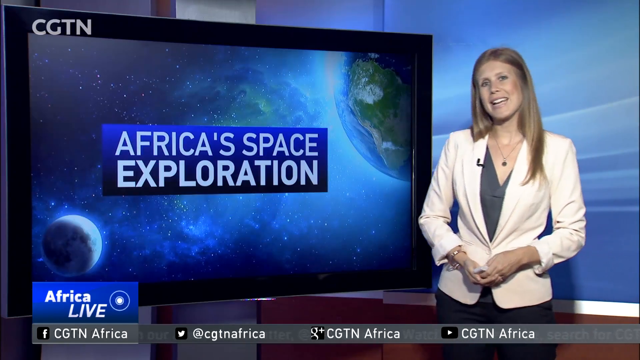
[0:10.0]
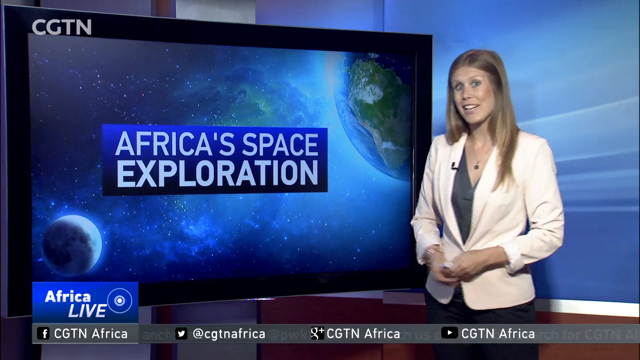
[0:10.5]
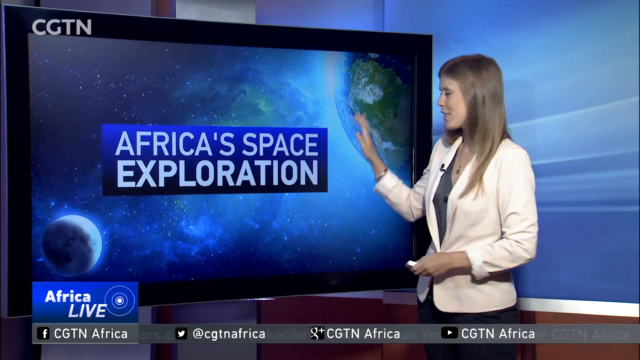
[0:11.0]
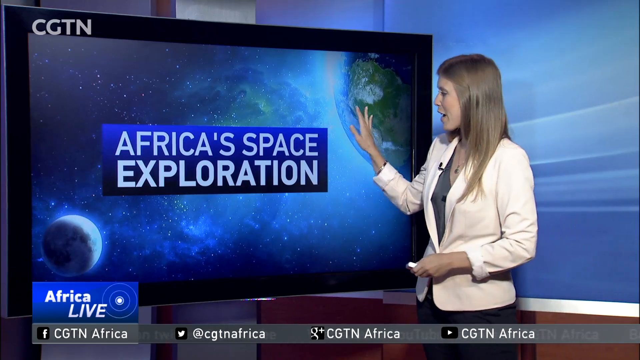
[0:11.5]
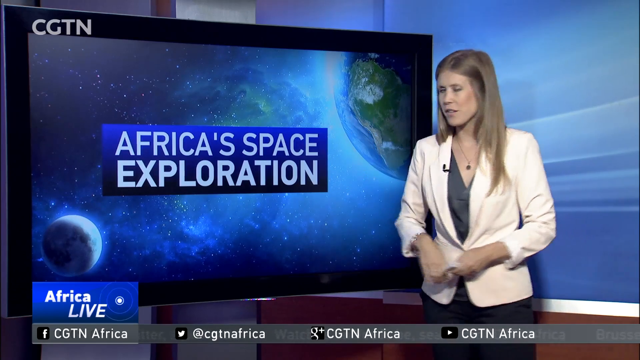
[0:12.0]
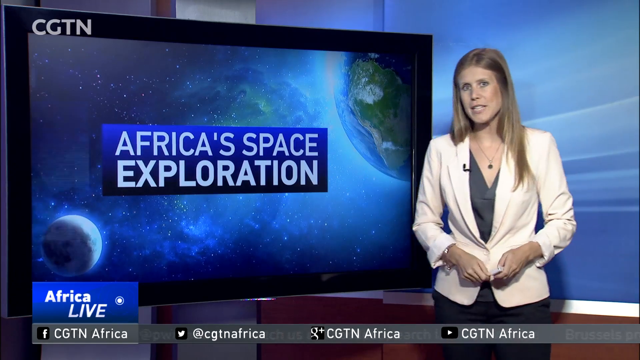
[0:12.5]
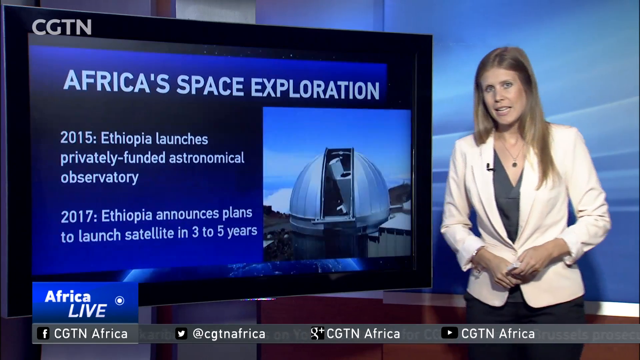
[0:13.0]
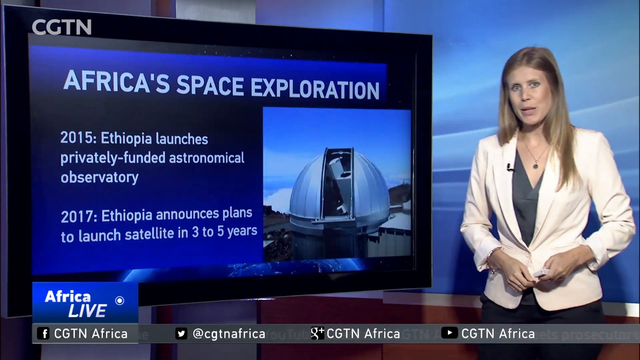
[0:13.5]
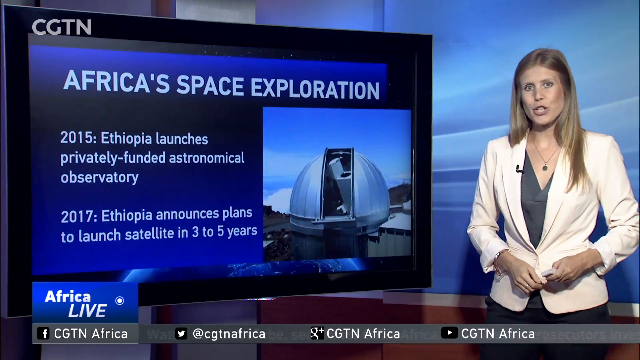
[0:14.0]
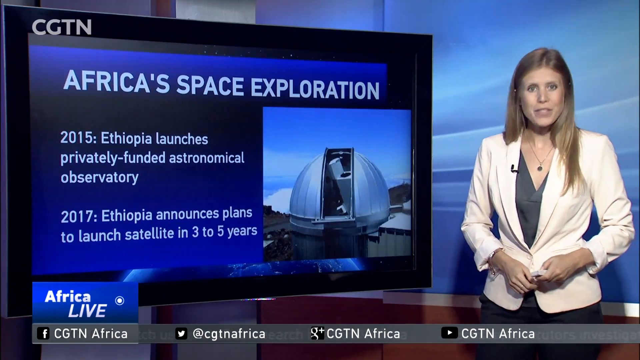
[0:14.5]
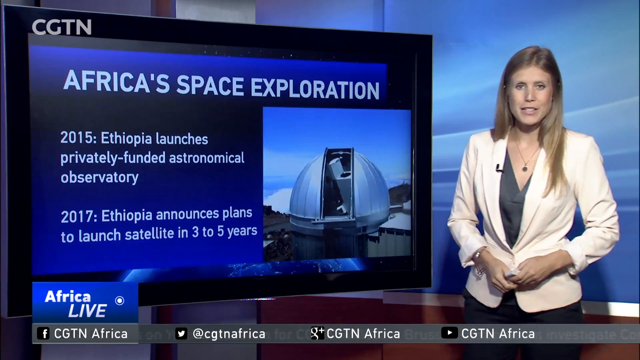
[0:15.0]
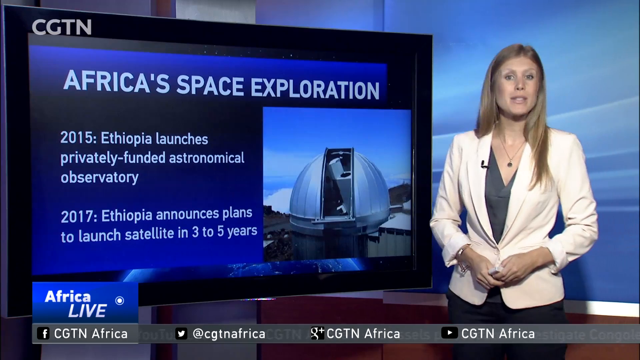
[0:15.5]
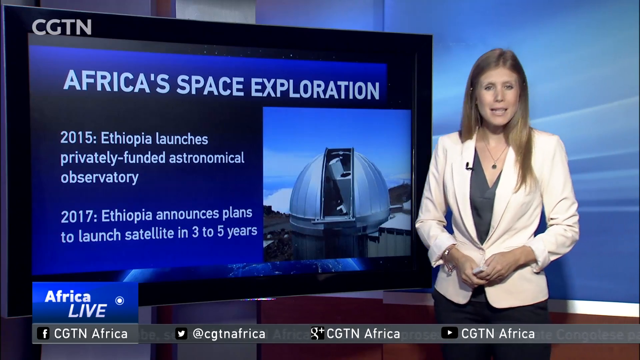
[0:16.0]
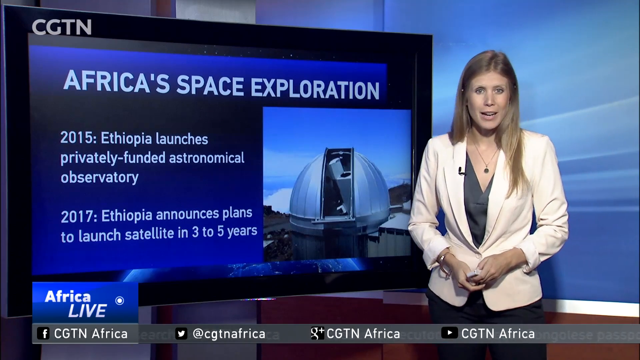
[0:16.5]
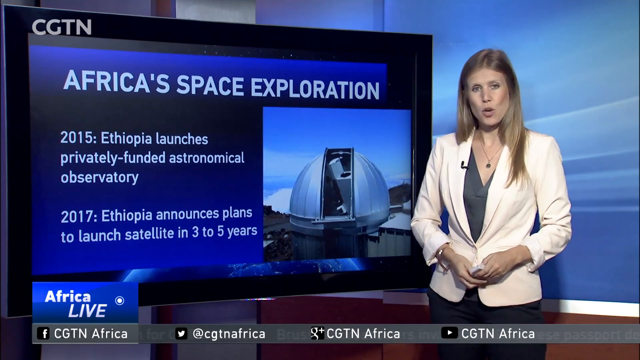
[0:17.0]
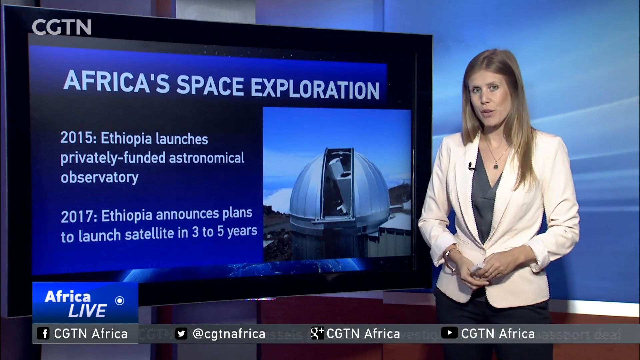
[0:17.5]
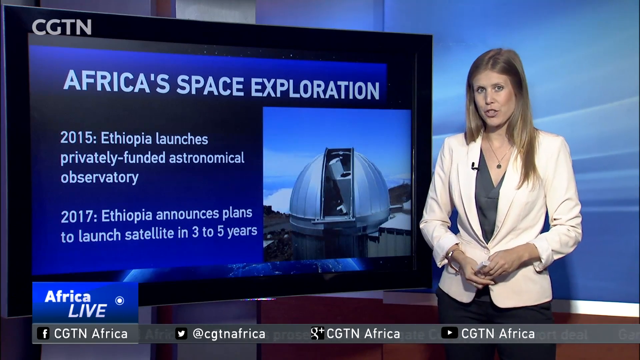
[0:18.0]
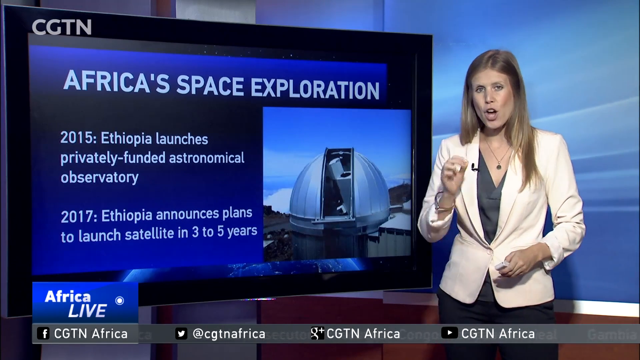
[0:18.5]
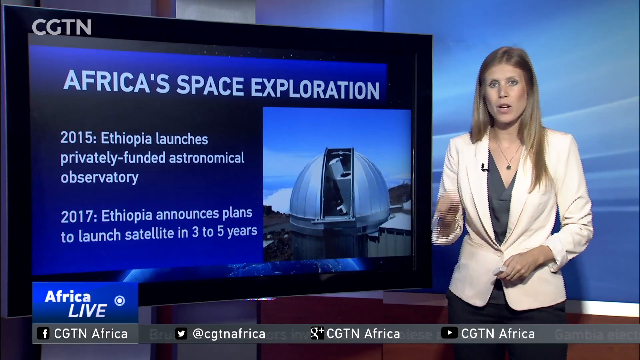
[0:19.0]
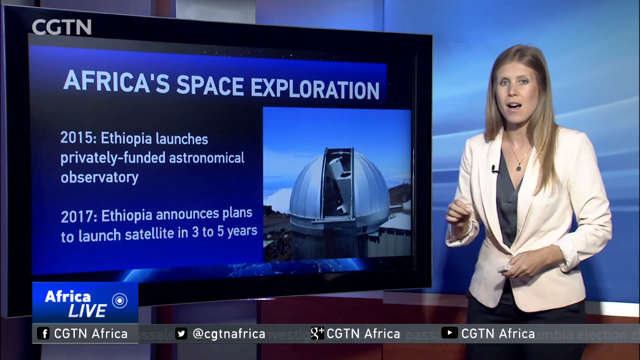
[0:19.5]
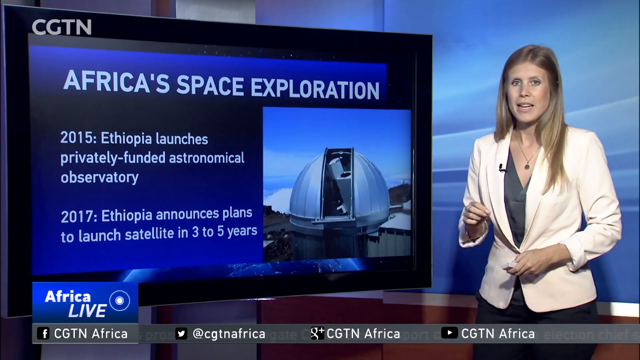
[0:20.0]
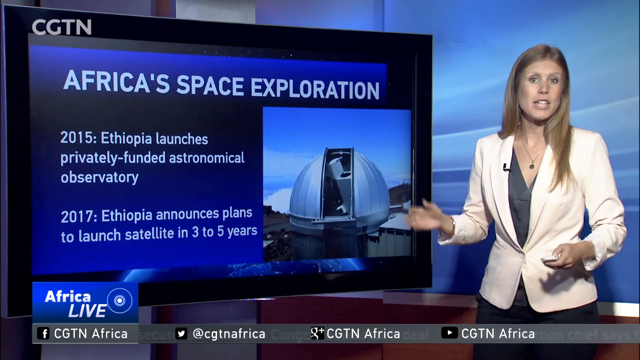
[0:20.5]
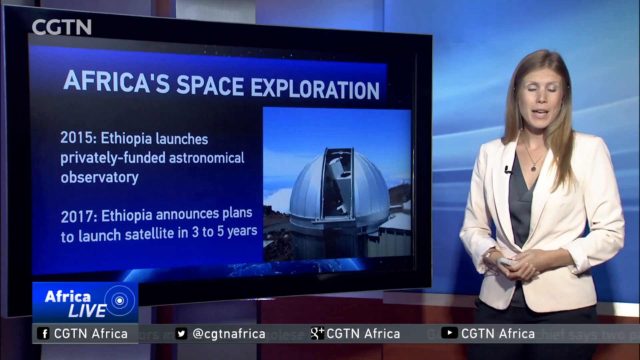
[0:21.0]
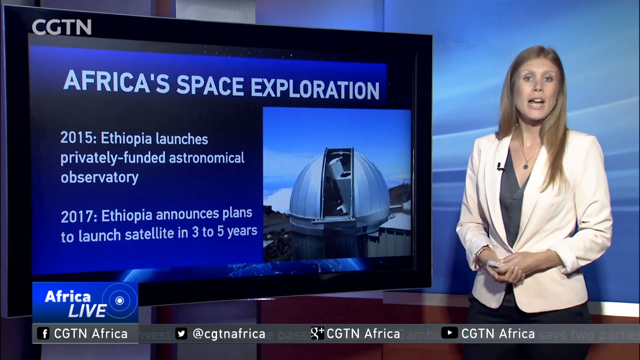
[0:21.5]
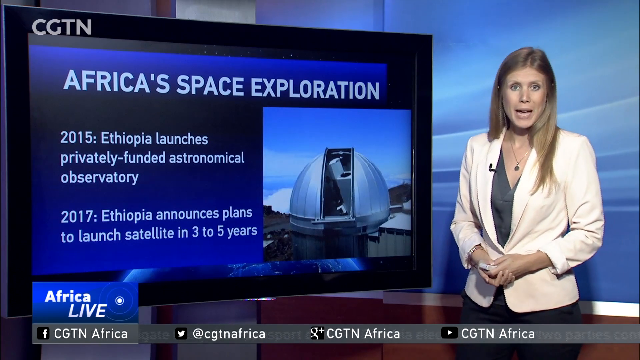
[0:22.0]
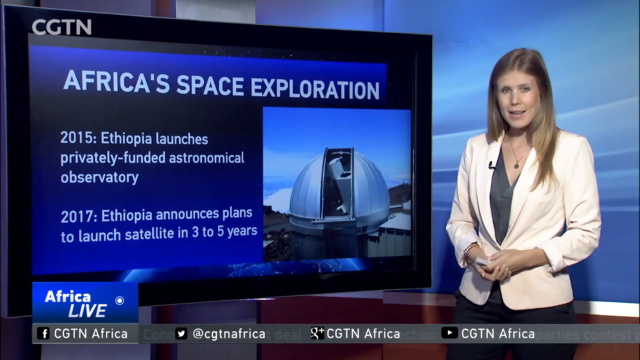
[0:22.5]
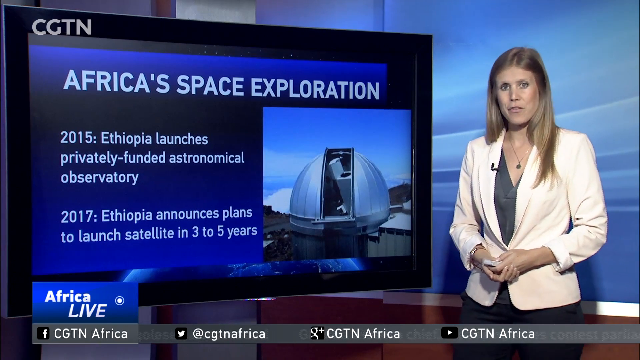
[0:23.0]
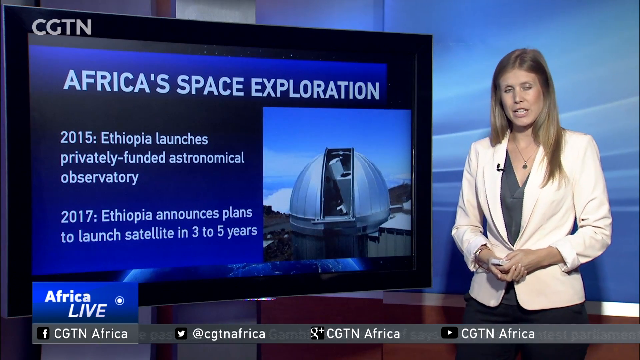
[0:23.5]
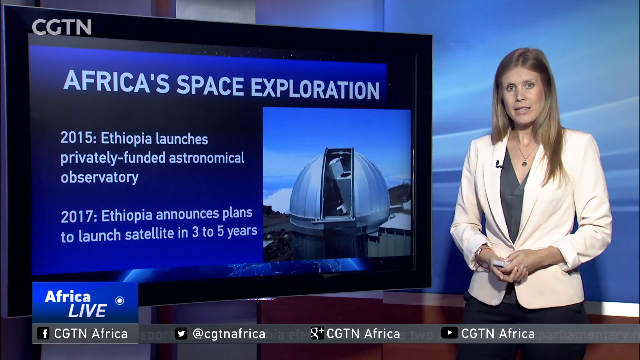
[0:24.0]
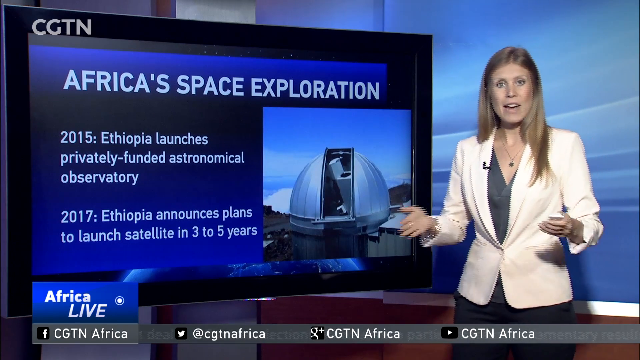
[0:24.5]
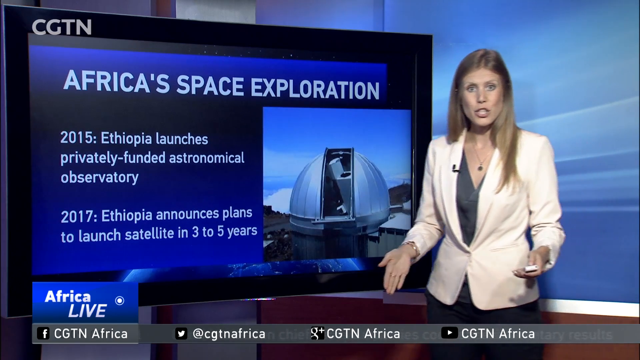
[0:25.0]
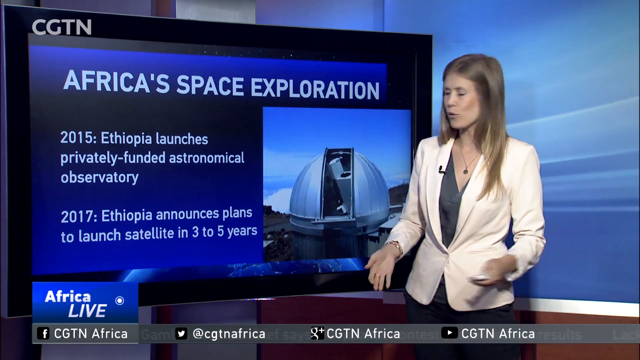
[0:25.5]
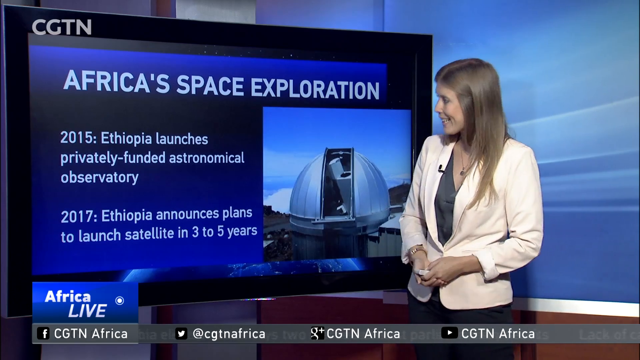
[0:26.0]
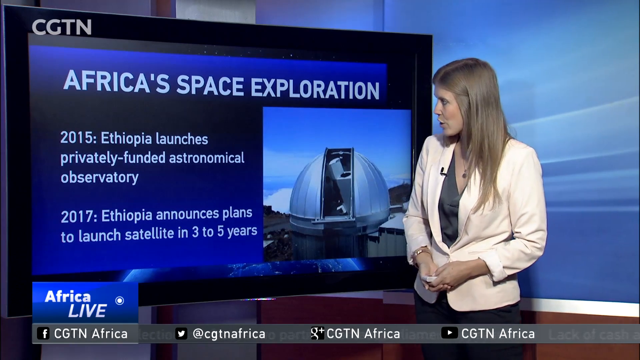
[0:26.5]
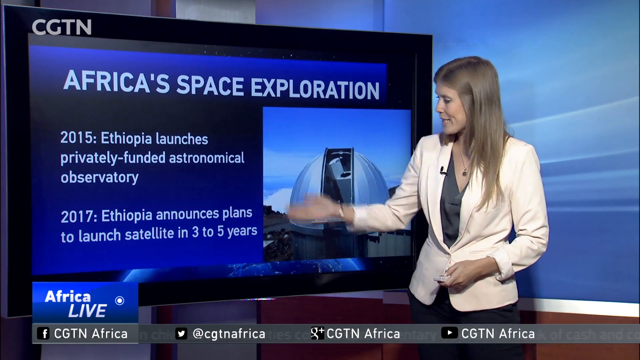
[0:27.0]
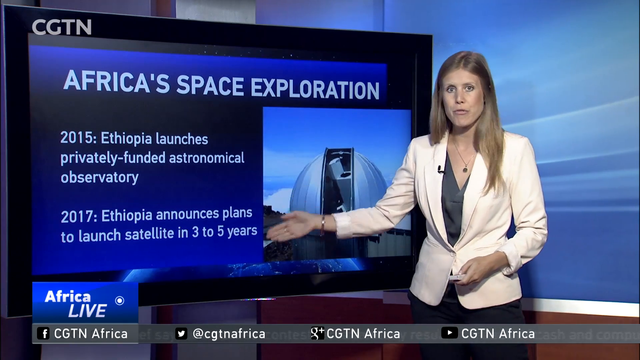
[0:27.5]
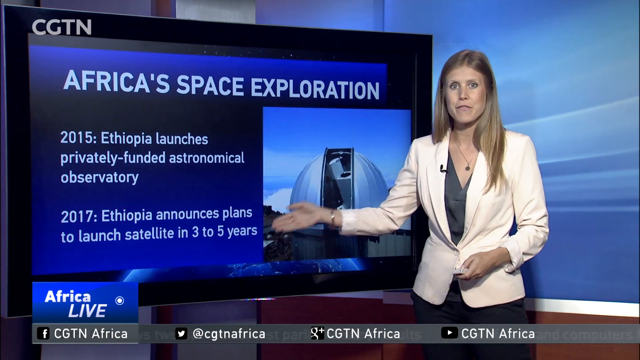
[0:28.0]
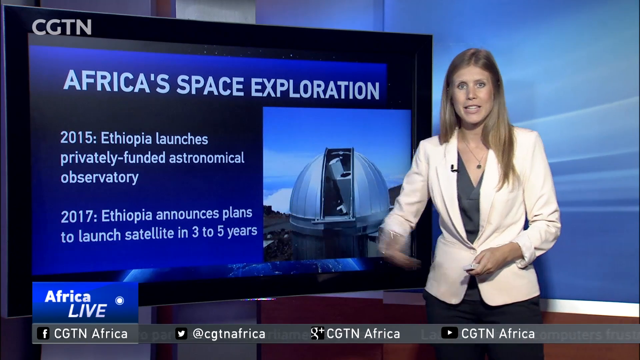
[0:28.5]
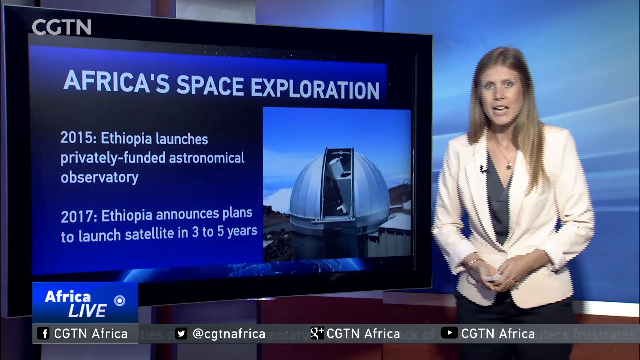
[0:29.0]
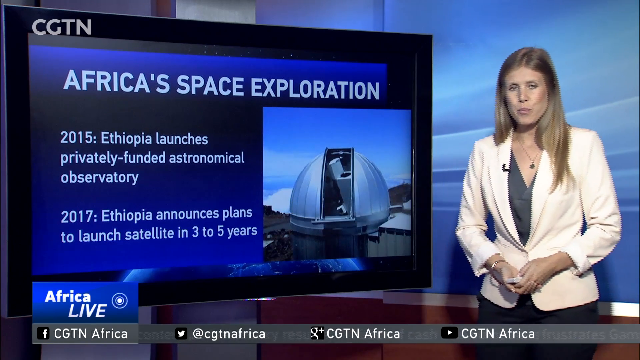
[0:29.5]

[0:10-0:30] The camera pans as the newscast switches to another reporter on the CGTN TV network. The TV shows "Africa's space exploration" in white lettering on a solid blue background box, along with an aerial image of what appears to be the moon and the earth from outer space, with colors and light casting shadows. The woman, who has long blonde hair and wears a white blazer over a darker undershirt, continues to talk, and a microphone is attached to her. The lower left-hand corner still shows the "Africa Live" logo in white text on a blue background, and a marquee at the bottom includes social media pages such as Facebook, Twitter, and Google+.